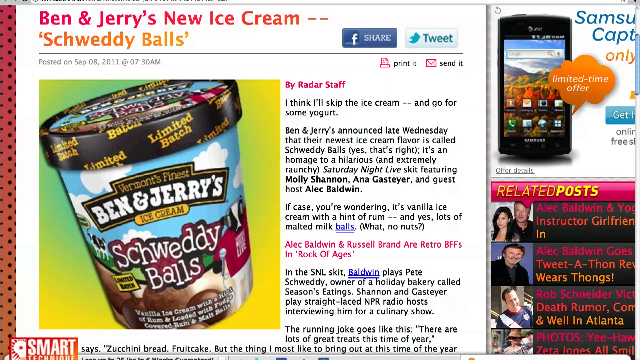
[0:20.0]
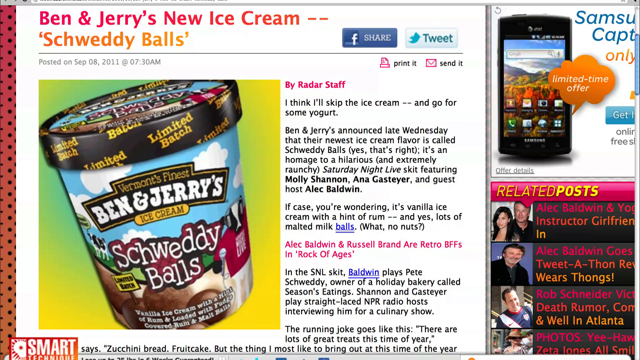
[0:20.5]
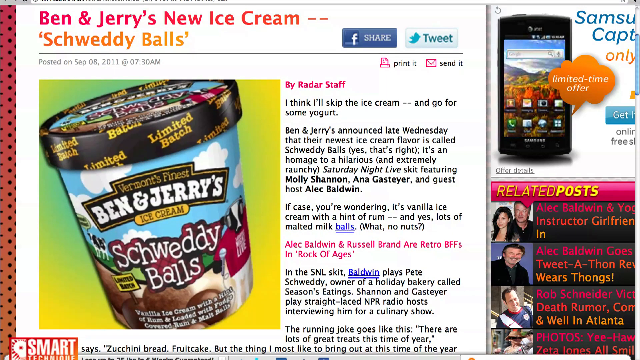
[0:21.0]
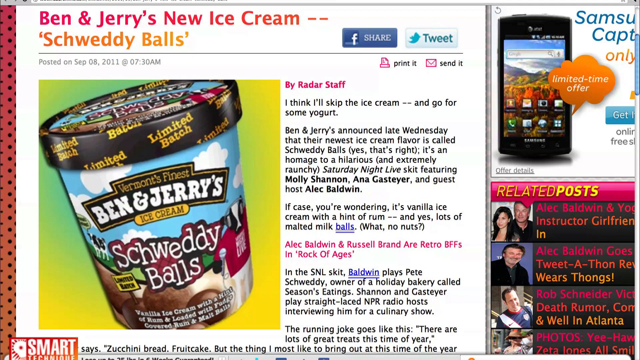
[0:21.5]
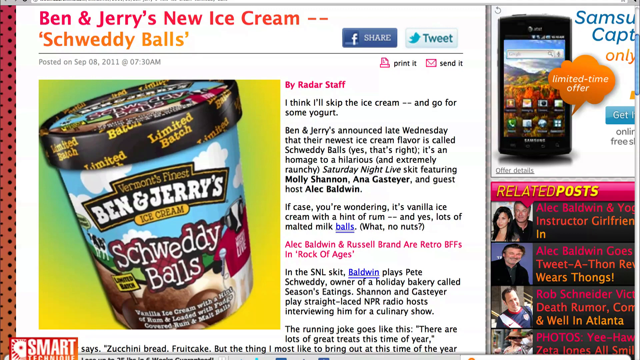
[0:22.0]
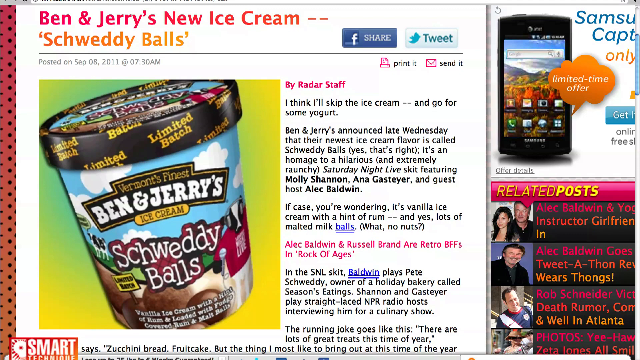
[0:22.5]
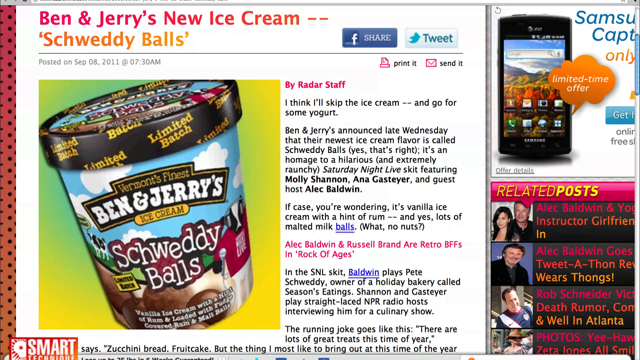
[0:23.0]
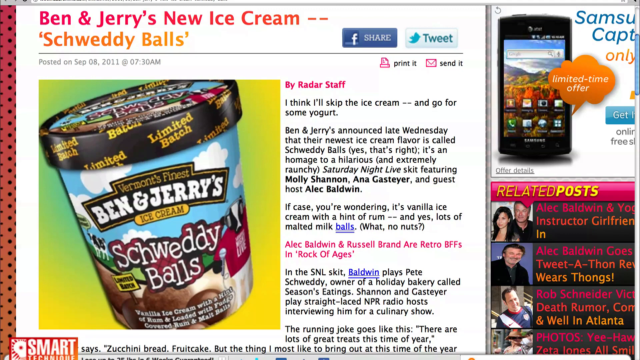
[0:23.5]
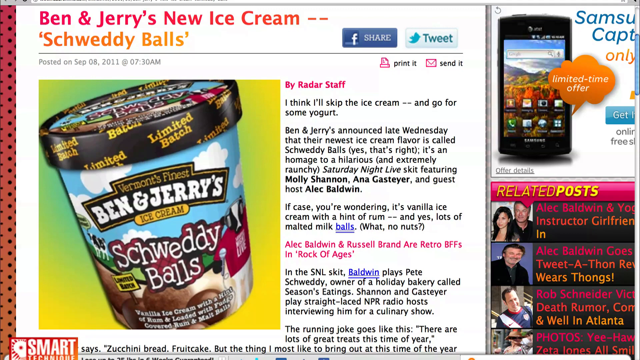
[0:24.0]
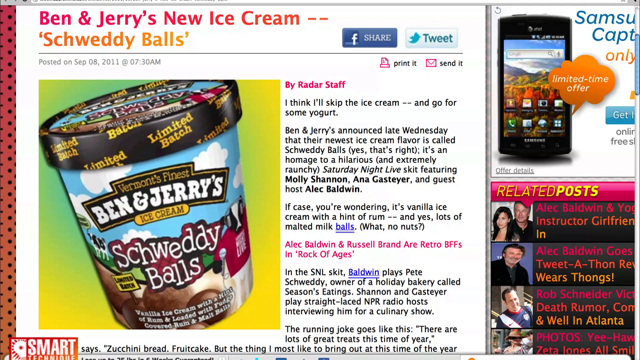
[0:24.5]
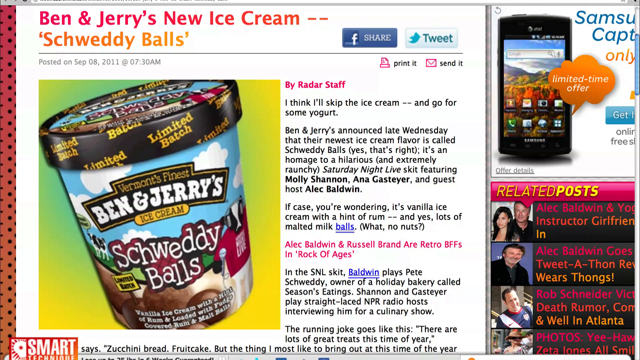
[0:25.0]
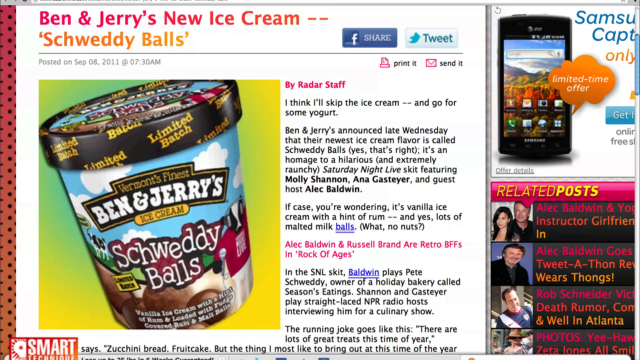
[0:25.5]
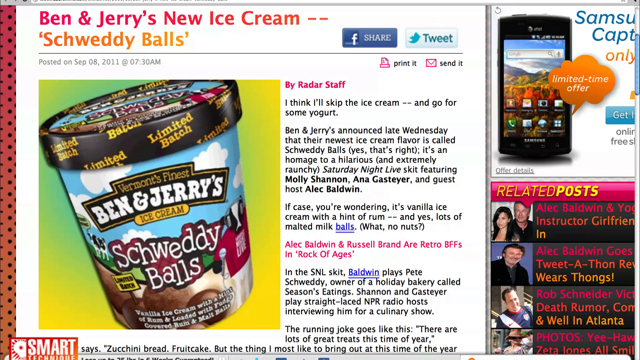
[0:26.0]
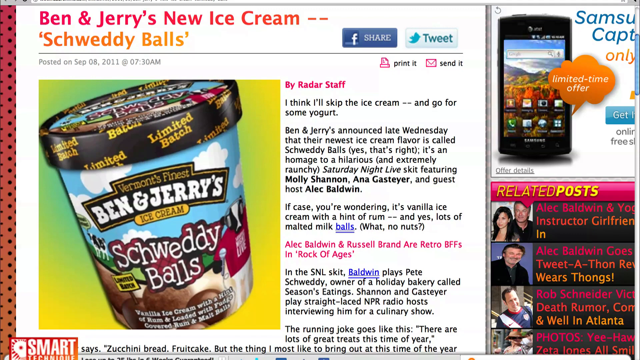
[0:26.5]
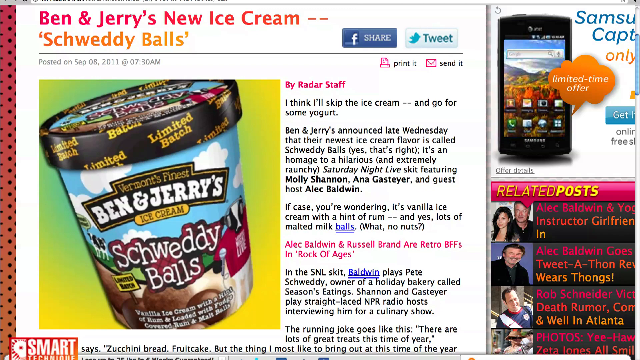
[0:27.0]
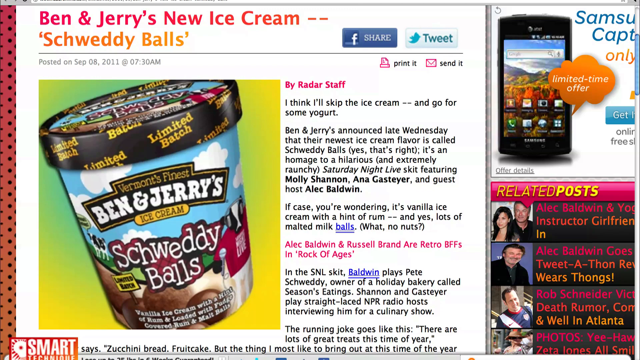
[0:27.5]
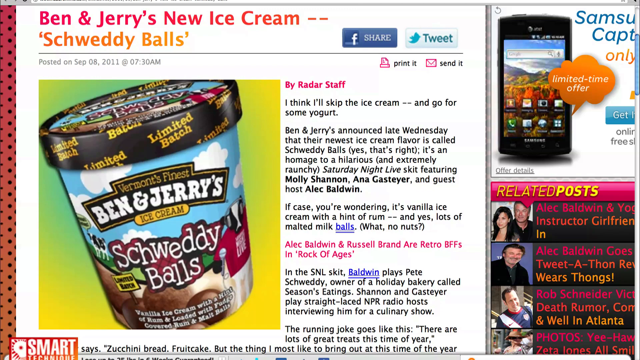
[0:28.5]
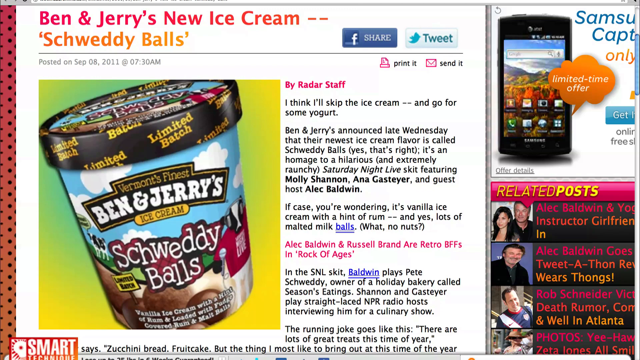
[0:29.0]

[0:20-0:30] An article page is headed "Ben and Jerry's new ice cream, sweaty balls" in pink and orange. There is a Facebook share button and a Twitter tweet button, and the article was posted on September 8th, 2011 at 7:30 a.m., with options to print the page or send it through email. Black and pink text appears next to a photo showing Vermont's finest Ben and Jerry's ice cream, sweaty balls. The text reads: "By radar staff. I think I'll skip the ice cream and go for some yogurt. Ben and Jerry's announced late Wednesday that their newest ice cream flavor is called sweaty balls. Yes, that's right. It's a homage to a hilarious and extremely raunchy Saturday night live skit featuring Molly Shannon, Anna Gasteyer and guest host Alec Baldwin. In case you're wondering, it's vanilla ice cream with a hint of rum. And yes, lots of malted milk balls. What? No, nuts. Alec Baldwin and Russell Brand are retro BFFs and rock of ages. In the SNL skit Baldwin plays Pete Schweddy, owner of a holiday bakery called Seasons Eating. Shannon and Gasteyer play straight laced NPR radio host interviewing him for a culinary show. The running joke goes like this. There are lots of great treats this time of year", after which the text cuts off. A Samsung advertisement is in the top right corner, and related posts on the page are about Alec Baldwin and Rob Schneider.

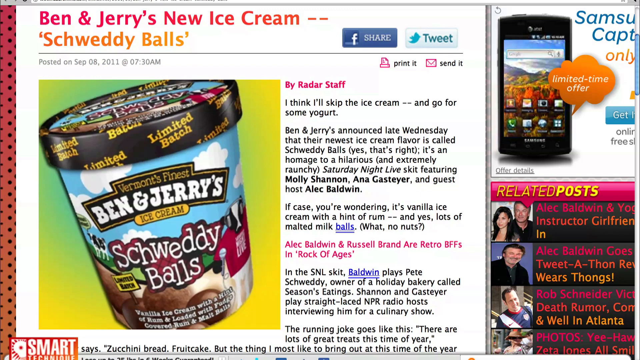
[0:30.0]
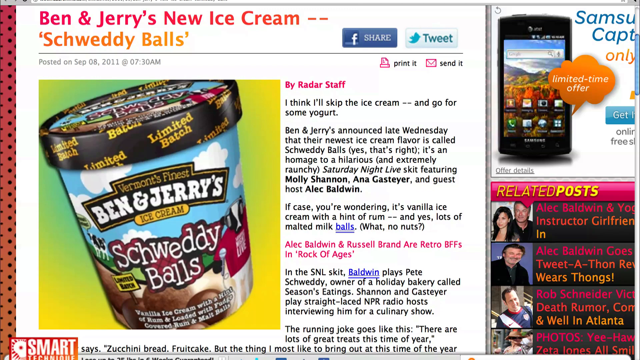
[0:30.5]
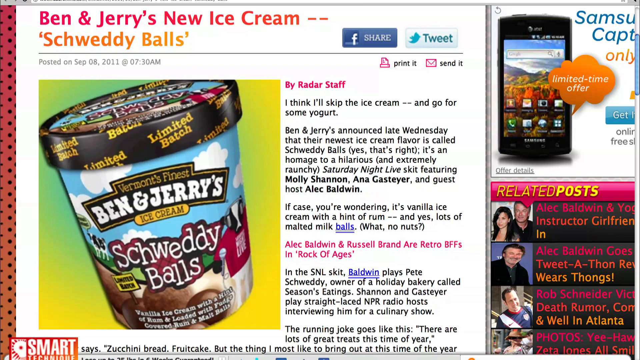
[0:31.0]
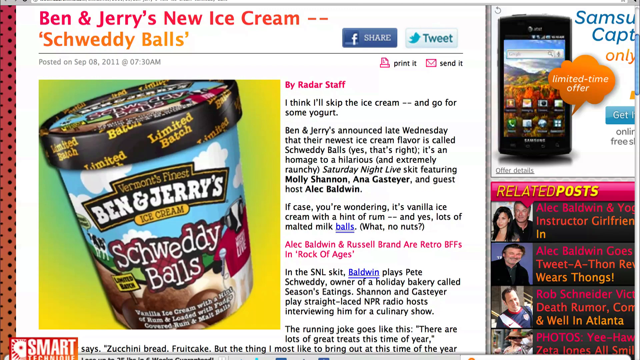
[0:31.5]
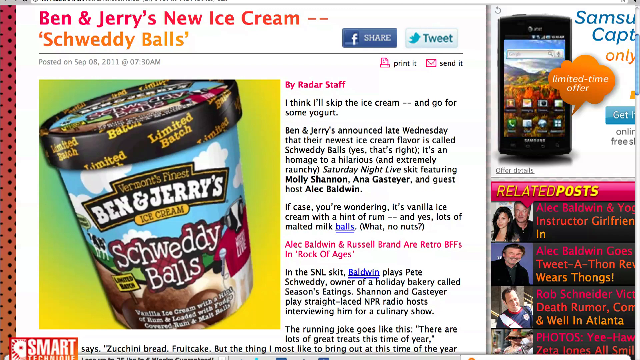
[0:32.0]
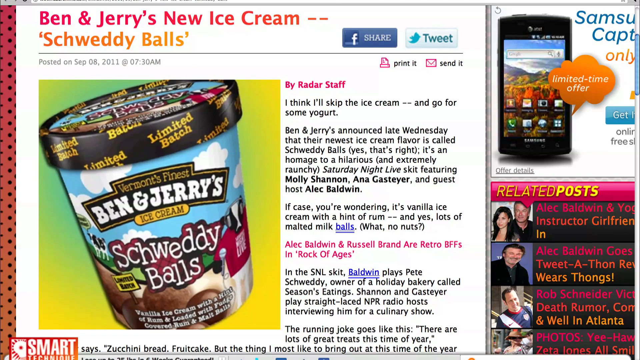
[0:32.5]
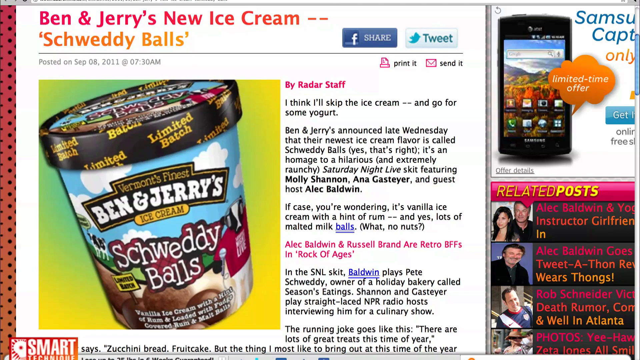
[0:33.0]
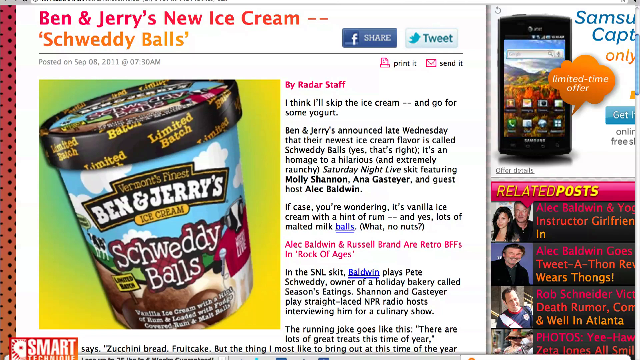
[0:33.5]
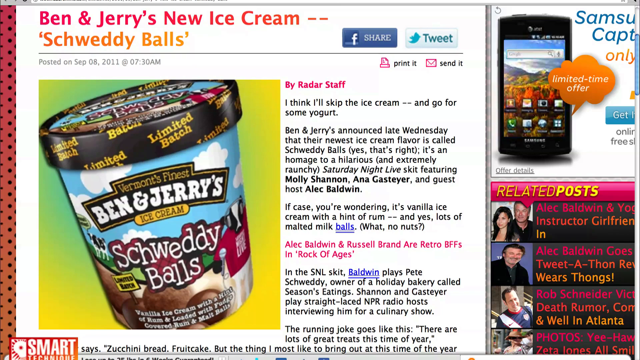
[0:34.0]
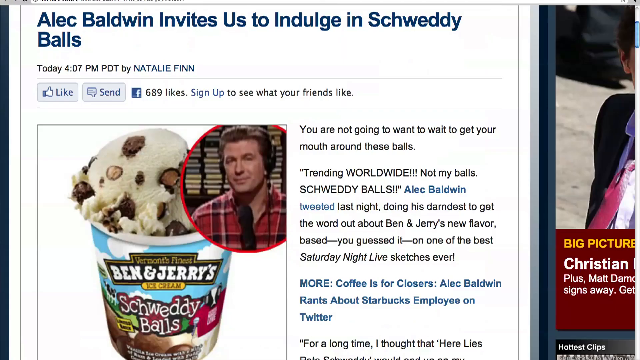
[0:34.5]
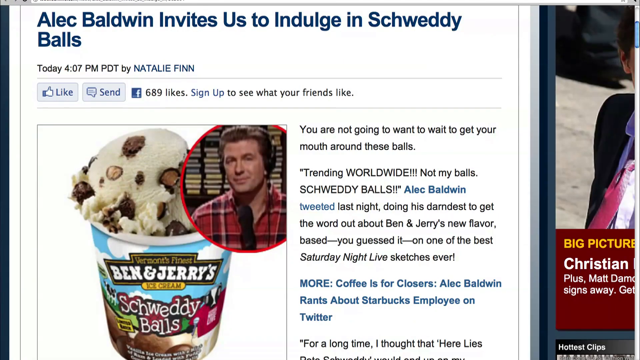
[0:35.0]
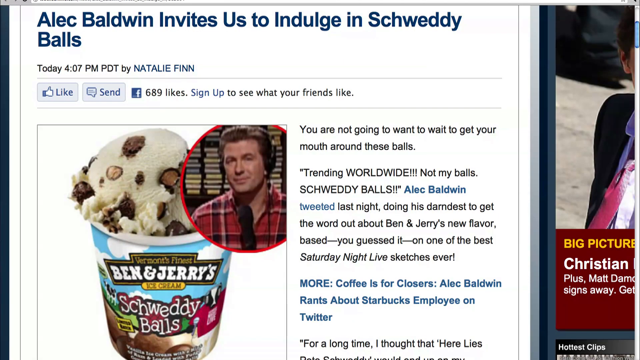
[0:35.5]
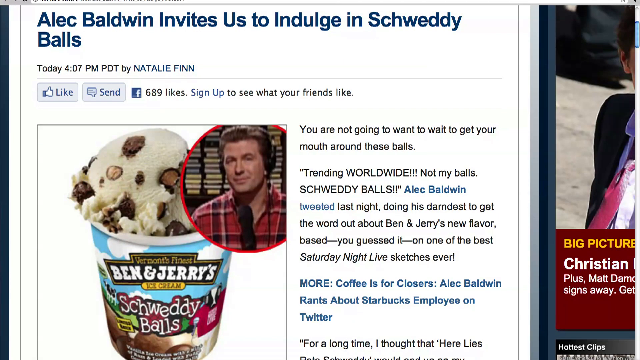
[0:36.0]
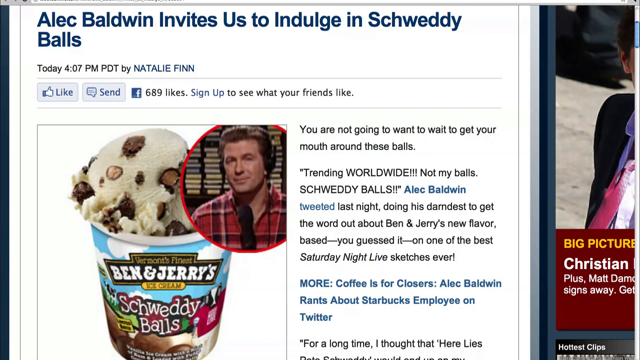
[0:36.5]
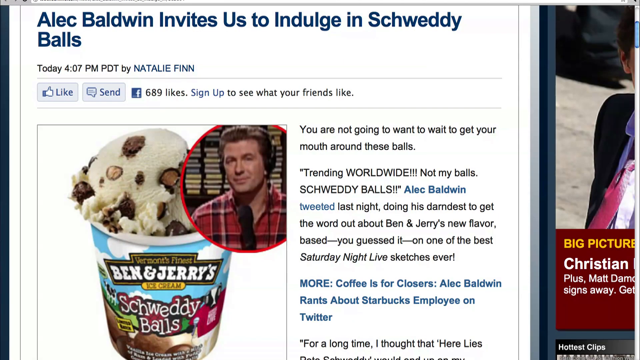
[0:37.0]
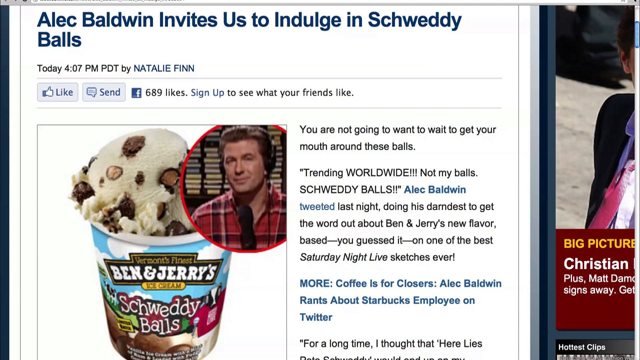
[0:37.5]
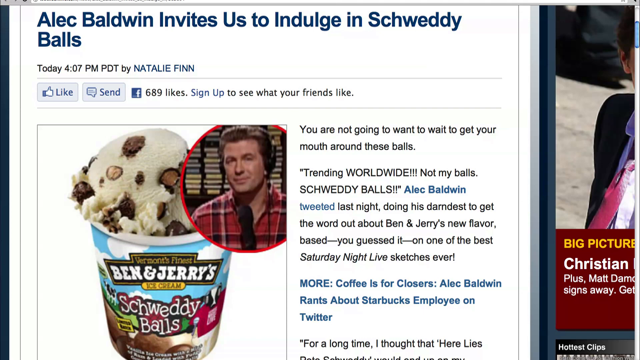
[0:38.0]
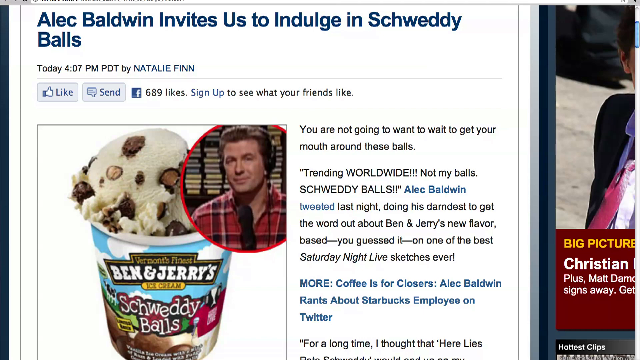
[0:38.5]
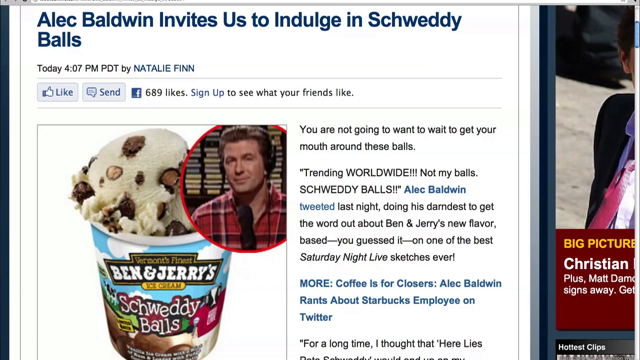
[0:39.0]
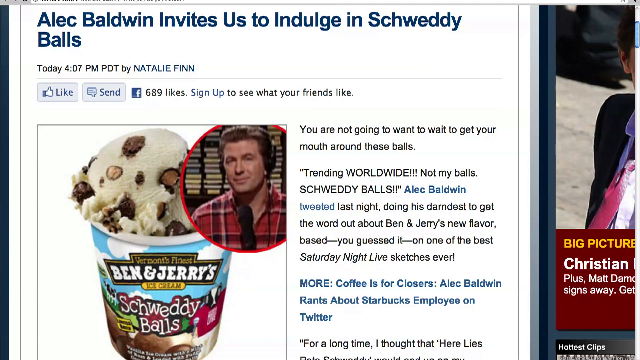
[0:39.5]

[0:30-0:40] A page shows the article "Ben & Jerry's new ice cream, Schweddy Balls" in pink and orange, posted on September 8, 2011 at 7:30 a.m., with a Facebook share button, a Twitter tweet button, and options to print the page or send it through email. On the left is a photo of Vermont's finest Ben & Jerry's ice cream called Schweddy Balls, and on the right black and pink text reads: "By radar staff. I think I'll skip the ice cream and go for some yogurt. Ben & Jerry's announced late Wednesday that their newest ice cream flavor is called Schweddy Balls. Yes, that's right. It's a homage to a hilarious and extremely raunchy Saturday Night Live skit featuring Molly Shannon, Anna Gasteyer, and guest host Alec Baldwin. In case you're wondering, it's vanilla ice cream with a hint of rum and yes, lots of malted milk balls. What? No nuts? Alec Baldwin and Russell Brand are retro BFFs and rock of ages. In the SNL skit, Baldwin plays Pete Schweddy, owner of a holiday bakery called Seasons Eatings. Shannon and Gasteyer play straight-laced NPR radio hosts interviewing him for a culinary show. The running joke goes like this. There are lots of great treats this time of year." The text then cuts off. A Samsung ad is in the top right corner, and a section reads "Related Posts" with topics such as Alec Baldwin and Rob Schneider. The view then moves to another article, titled in blue text "Alec Baldwin invites us to indulge in Schweddy Balls", posted today at 4:07 p.m. PDT by Natalie Finn. There is a Facebook like button, a send message button, and a Facebook icon with text reading "689 likes. Sign up to see what your friends like." A photo shows Alec Baldwin next to a Ben & Jerry's Schweddy Balls ice cream container. Black text reads: "You are not going to want to wait to get your mouth around these balls. Trending worldwide, not my balls, Schweddy Balls. Alec Baldwin tweeted last night doing his darndest to get the word out about Ben & Jerry's new flavor based, you guessed it, on one of the best Saturday Night Live sketches ever." It also says "More coffee is for closers. Alec Baldwin rants about Starbucks employee on Twitter. For a long time I thought that here lies" before cutting off. A picture on the right reads "big picture Christian" plus "Matt Damon", with some of the text cut off.